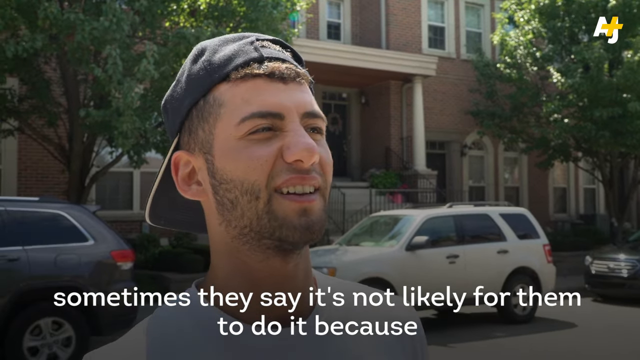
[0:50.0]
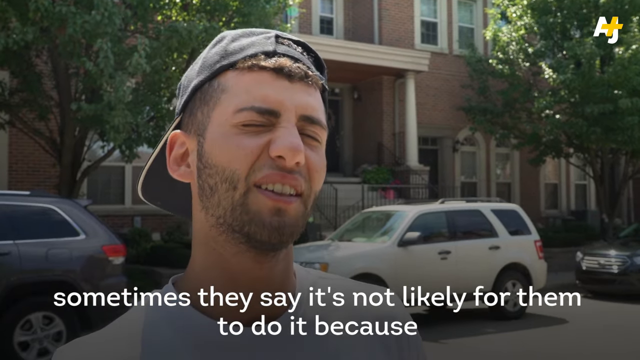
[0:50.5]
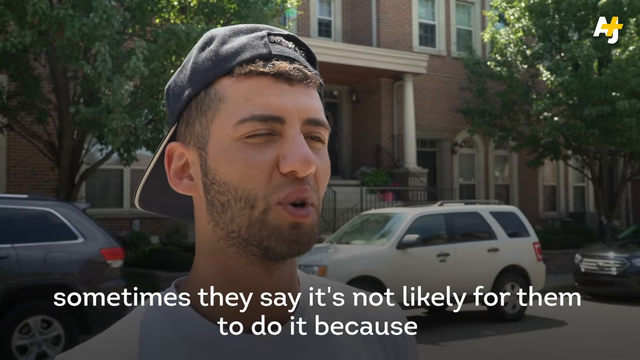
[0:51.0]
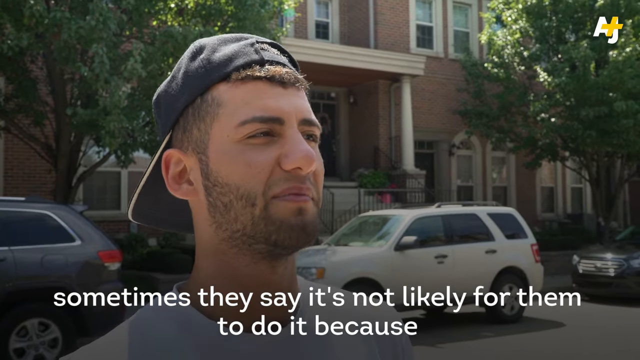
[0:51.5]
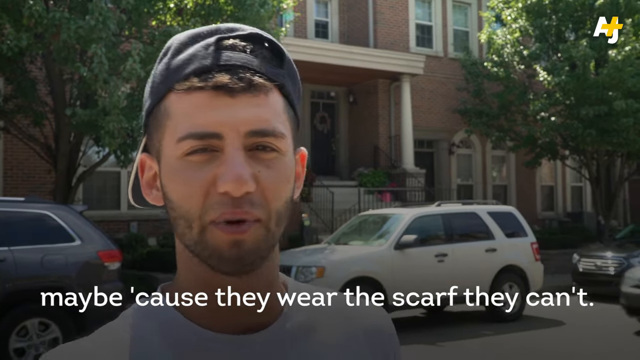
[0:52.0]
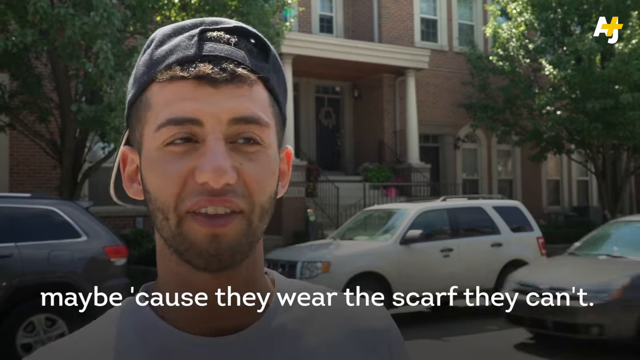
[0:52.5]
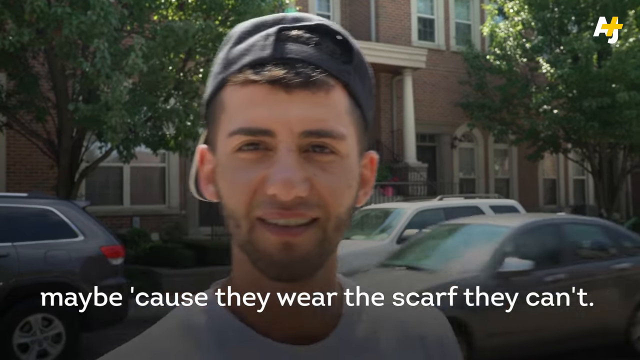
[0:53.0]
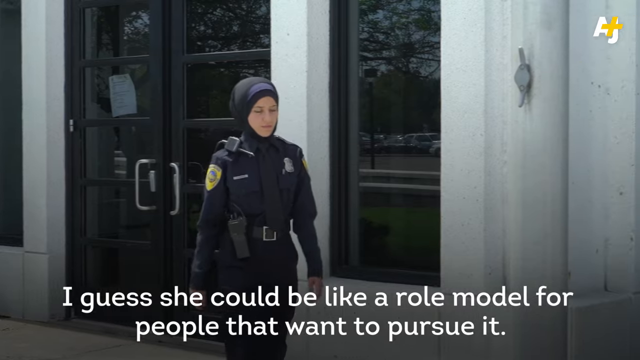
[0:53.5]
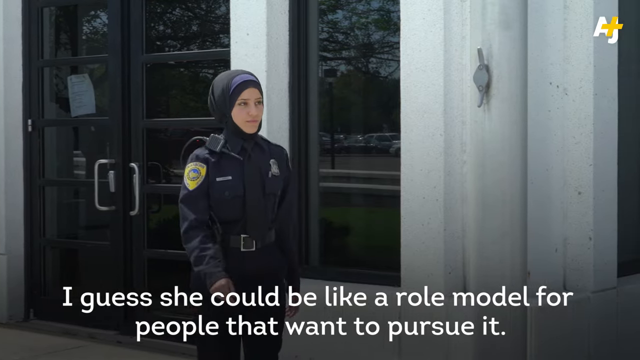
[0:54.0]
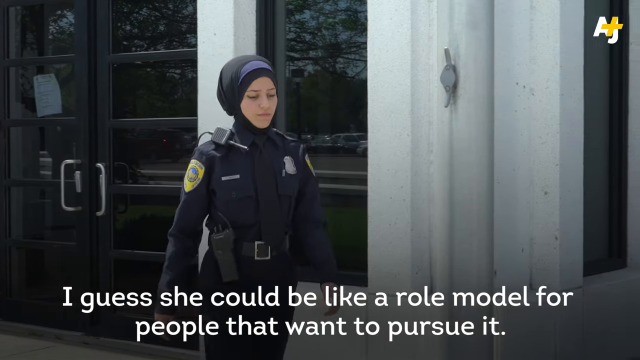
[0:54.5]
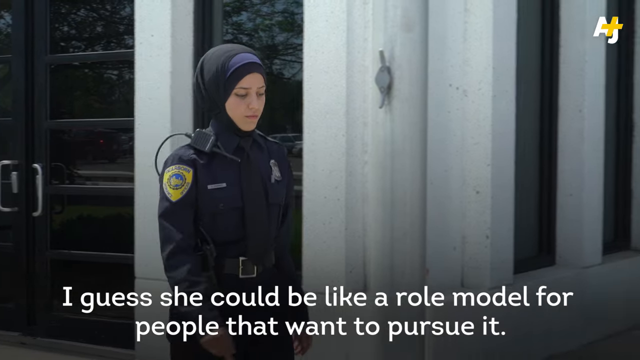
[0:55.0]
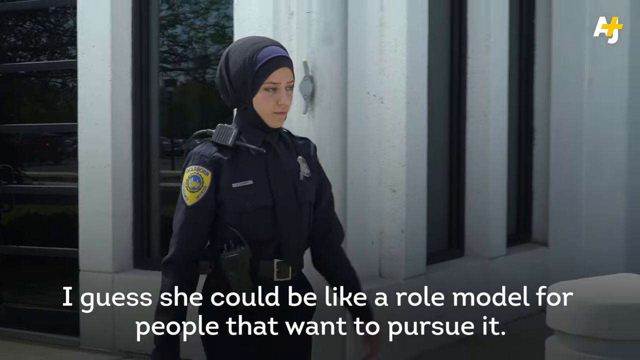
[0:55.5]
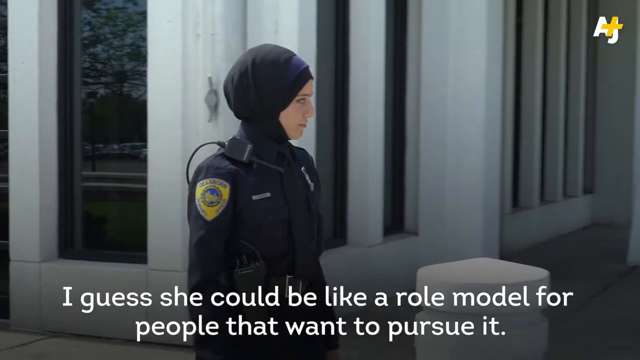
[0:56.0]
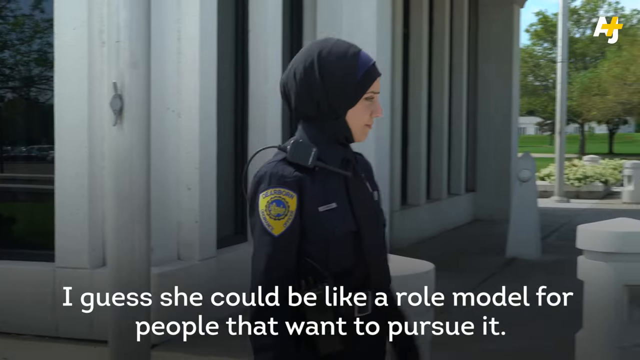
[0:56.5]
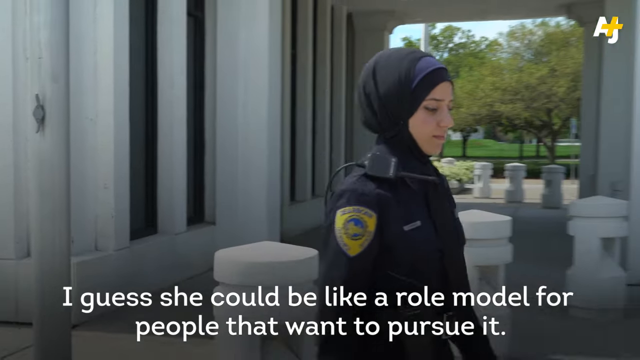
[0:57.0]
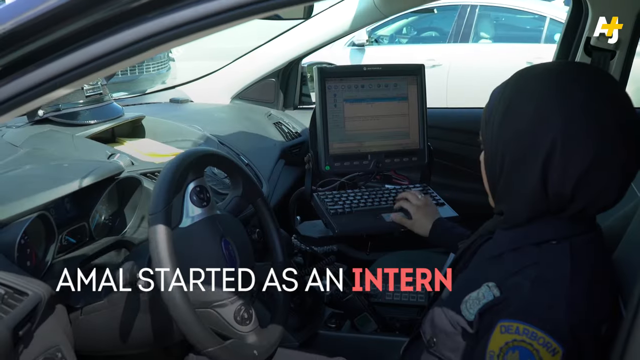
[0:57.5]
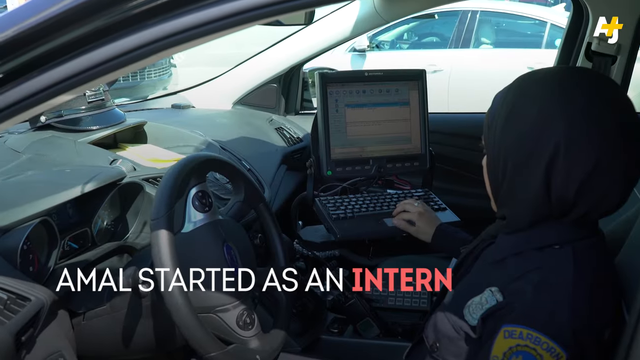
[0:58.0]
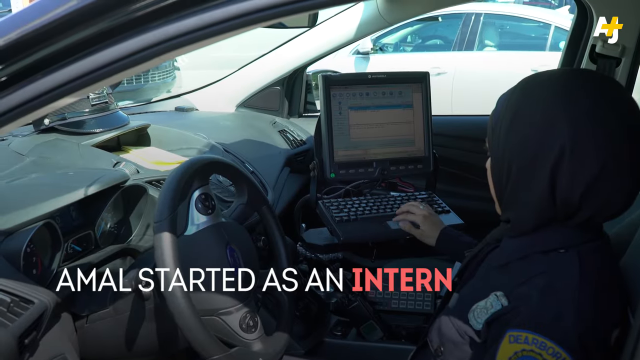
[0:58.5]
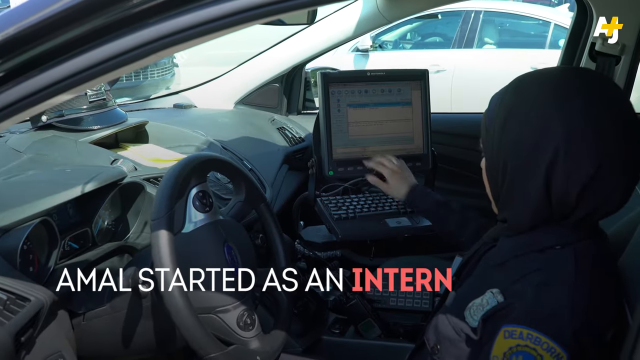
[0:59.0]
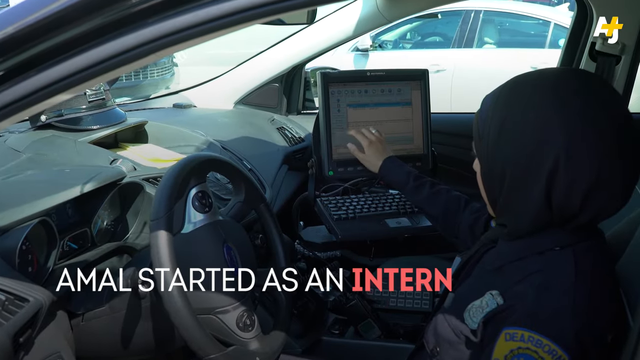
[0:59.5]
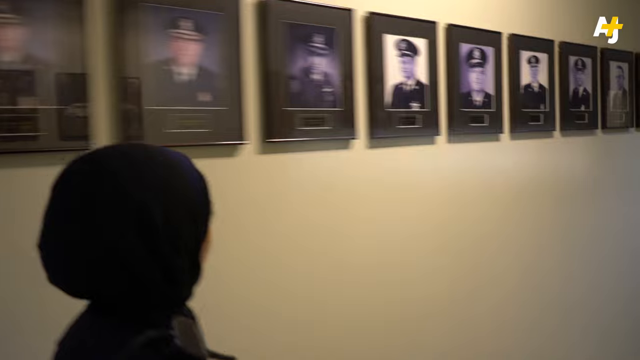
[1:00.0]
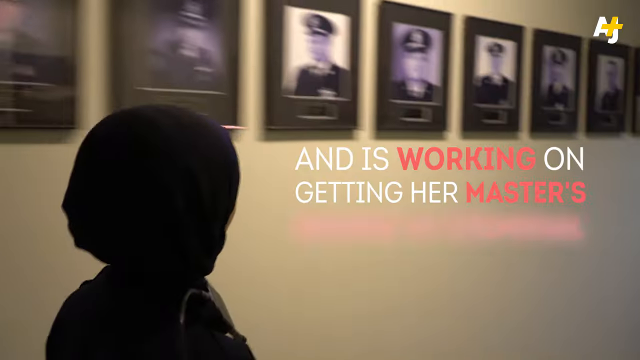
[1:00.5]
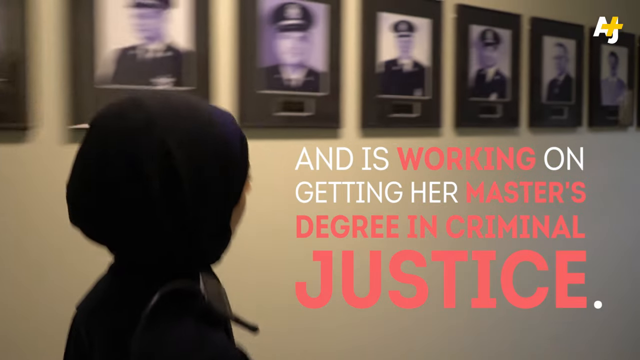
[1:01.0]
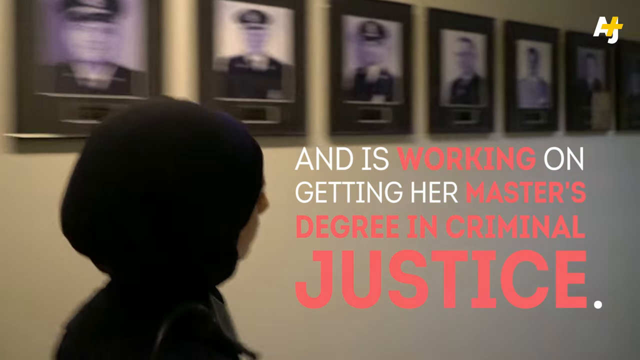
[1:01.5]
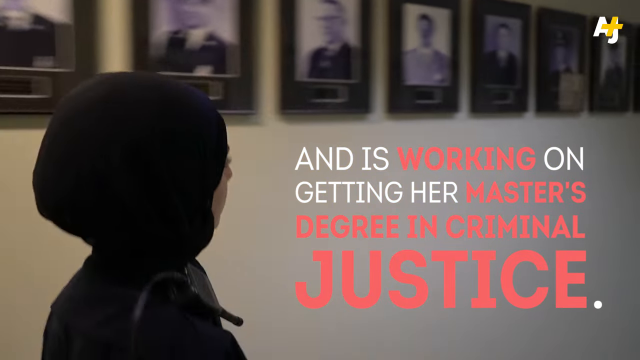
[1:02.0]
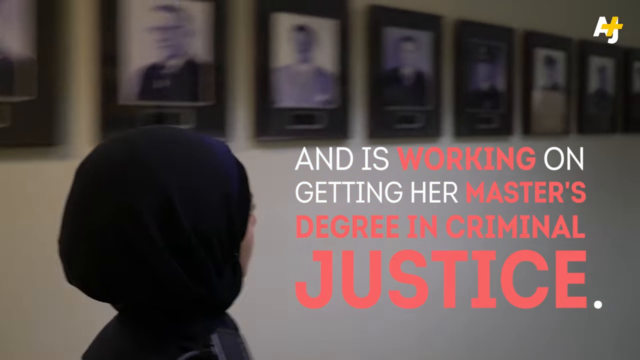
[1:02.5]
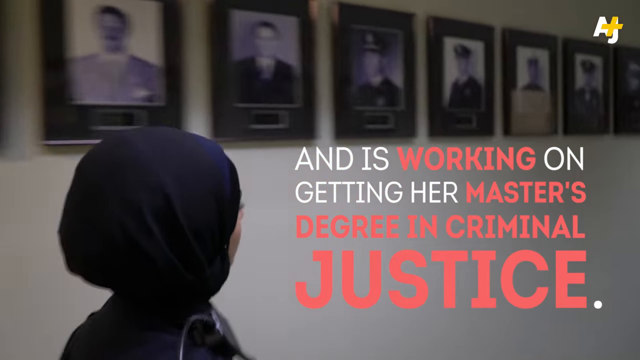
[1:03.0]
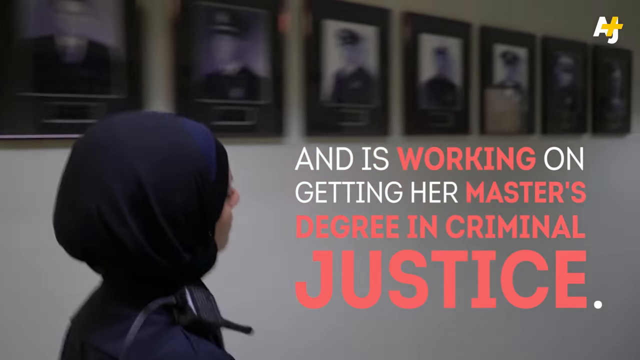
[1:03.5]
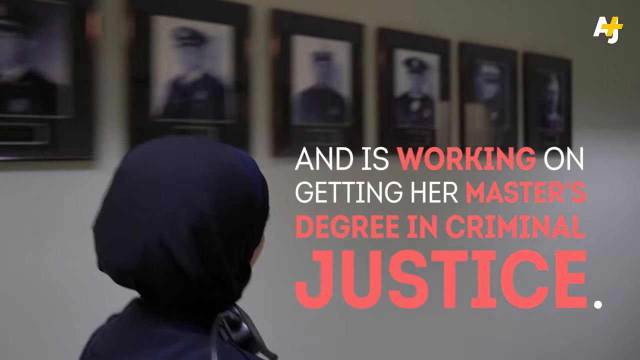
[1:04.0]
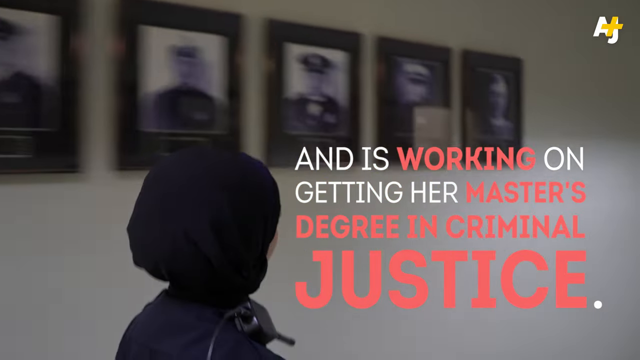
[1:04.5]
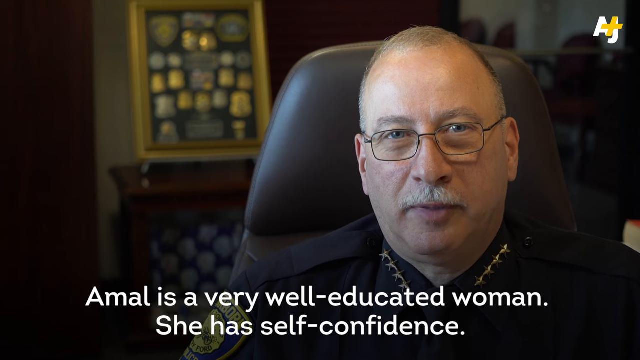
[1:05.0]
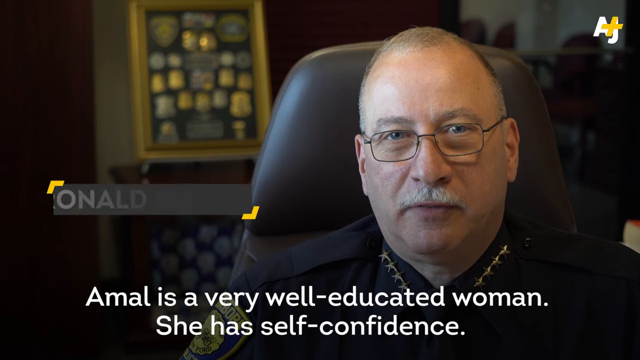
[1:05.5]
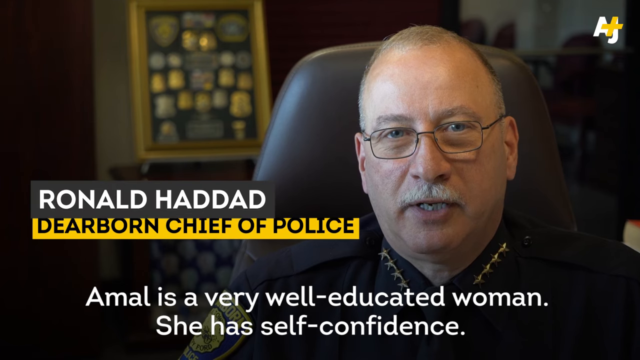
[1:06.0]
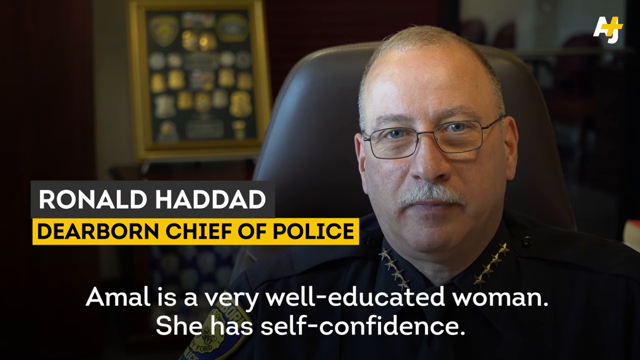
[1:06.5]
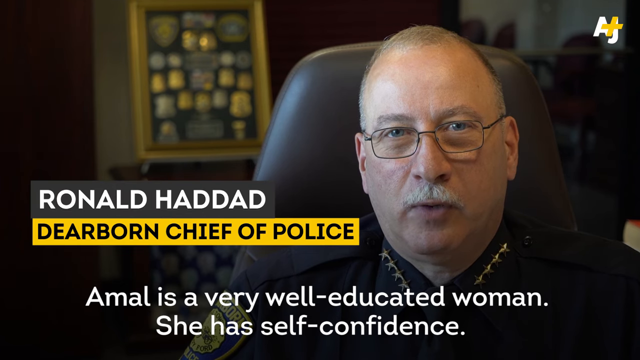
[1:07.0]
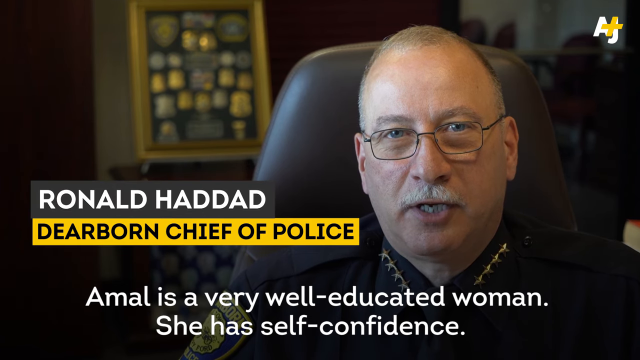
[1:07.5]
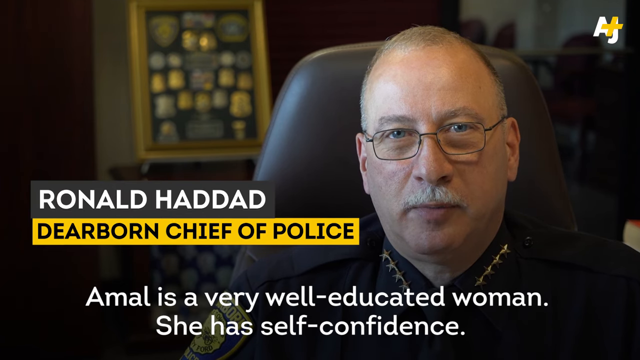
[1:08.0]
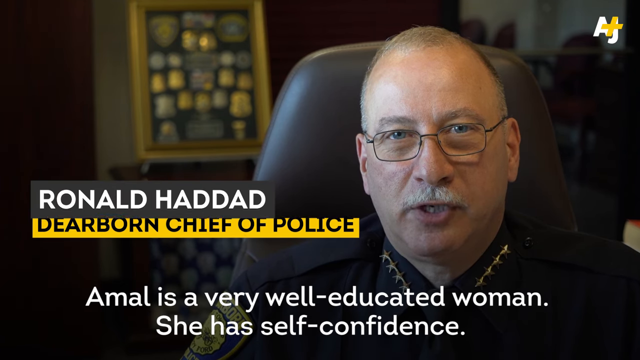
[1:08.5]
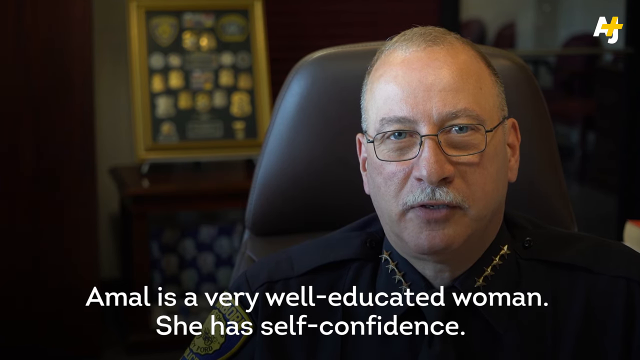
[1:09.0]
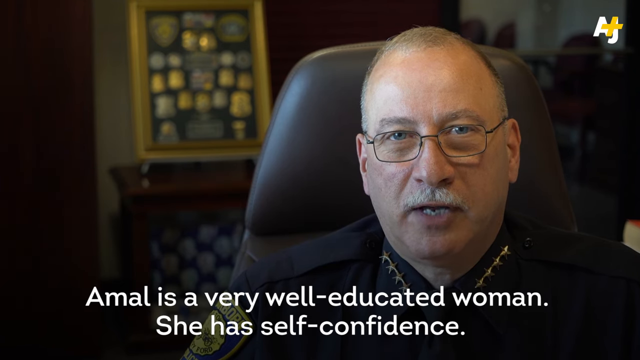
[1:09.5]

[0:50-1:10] Amal talks to the younger man in the backwards hat and white shirt, who says he is proud of what she is doing and apparently sees her as an inspiration for other women in the community. She walks through her community. Text says "Amal started as an intern and is working on getting her master's degree in criminal justice". Her chief of police, Ronald Haddad, appears to speak about her positively. Multiple shots show Amal walking through her community and idling in her police car, and she walks past many portraits on her left, apparently of former police officers or chiefs of her department. The people around her appear happy and excited for her. The chief says she is a very well-educated woman with self-confidence.